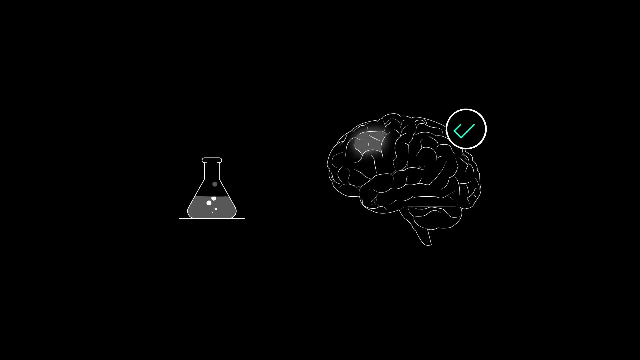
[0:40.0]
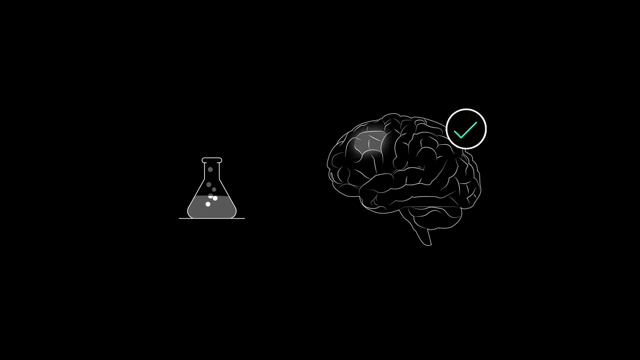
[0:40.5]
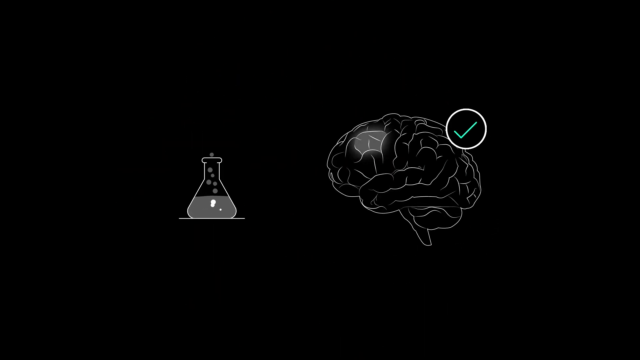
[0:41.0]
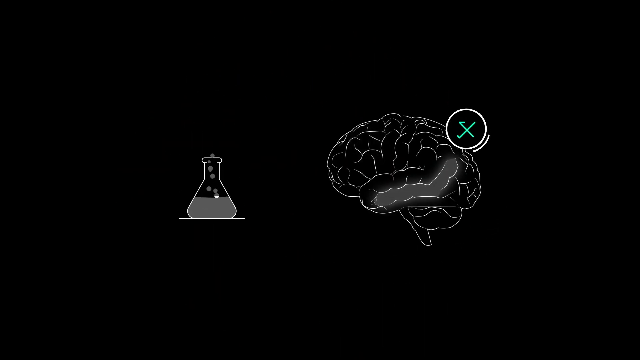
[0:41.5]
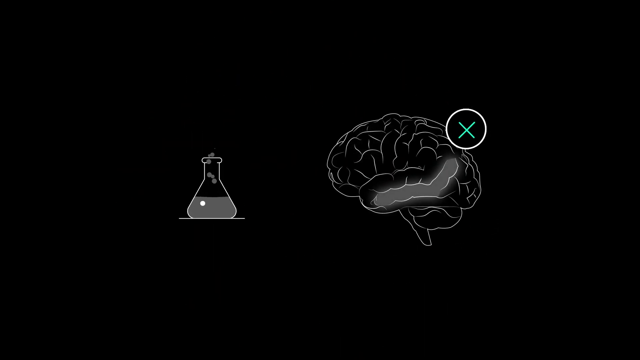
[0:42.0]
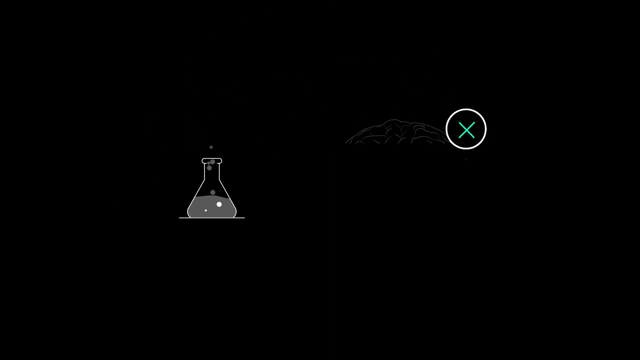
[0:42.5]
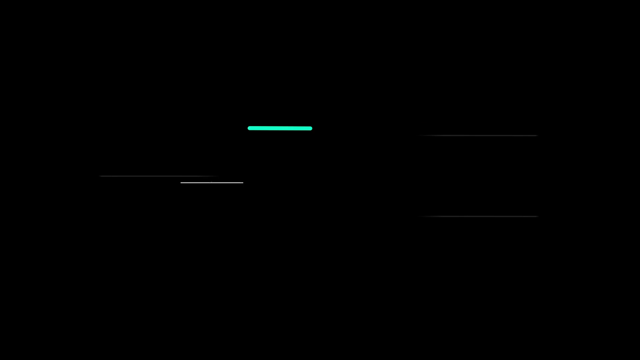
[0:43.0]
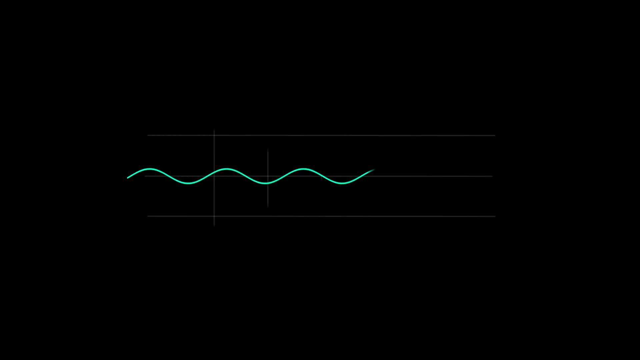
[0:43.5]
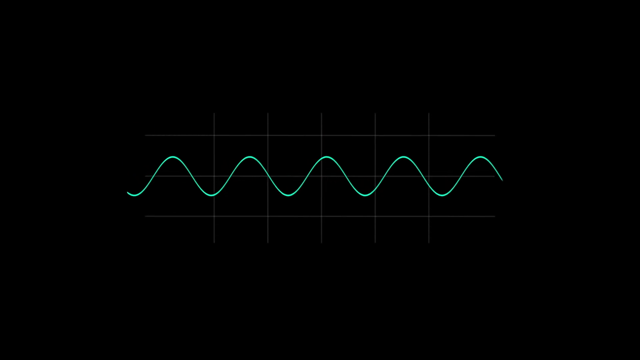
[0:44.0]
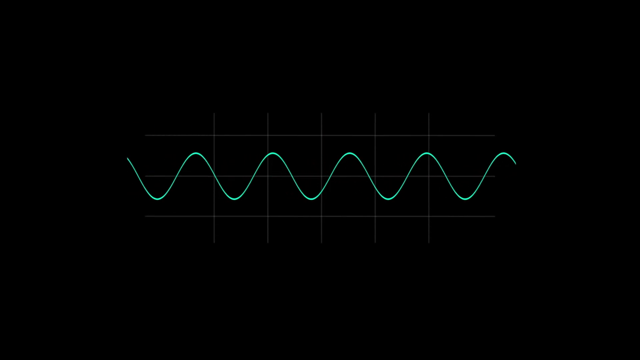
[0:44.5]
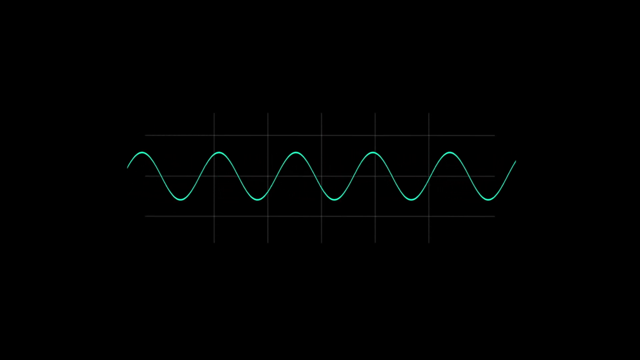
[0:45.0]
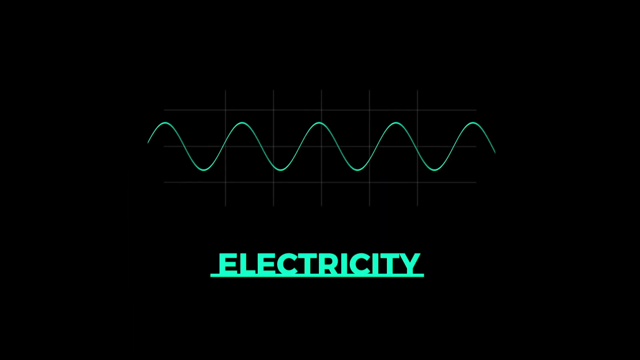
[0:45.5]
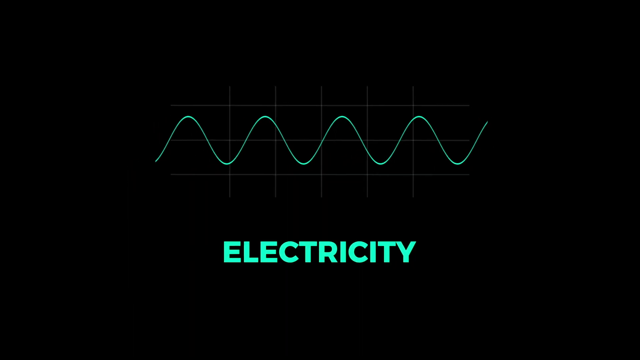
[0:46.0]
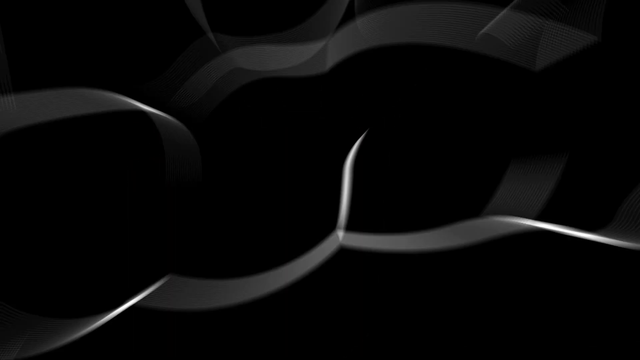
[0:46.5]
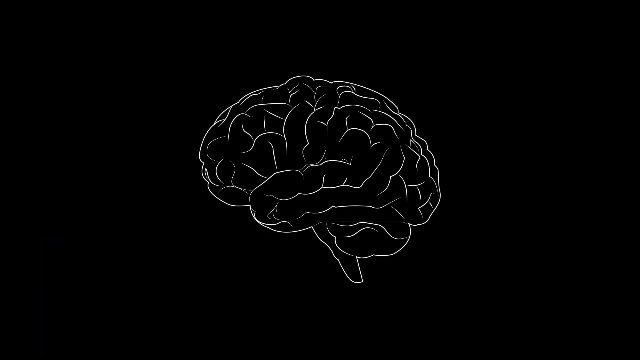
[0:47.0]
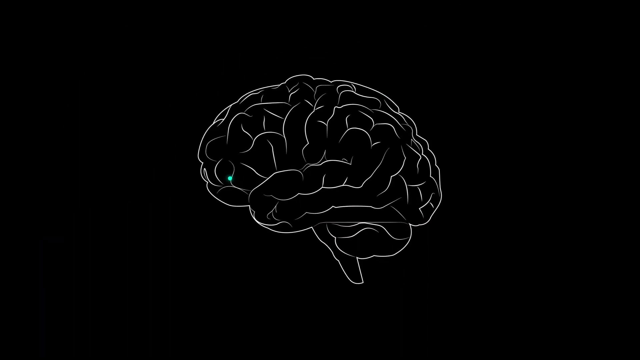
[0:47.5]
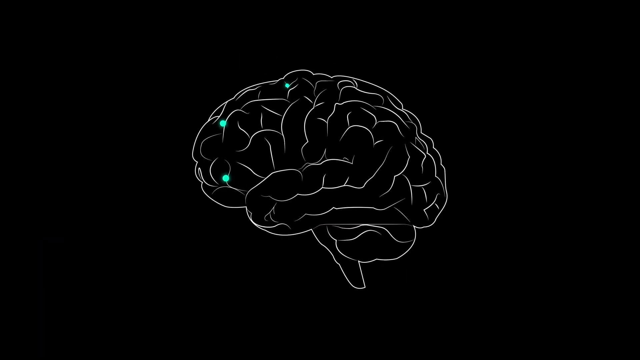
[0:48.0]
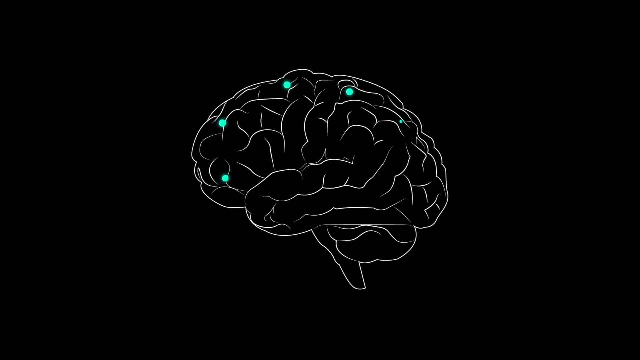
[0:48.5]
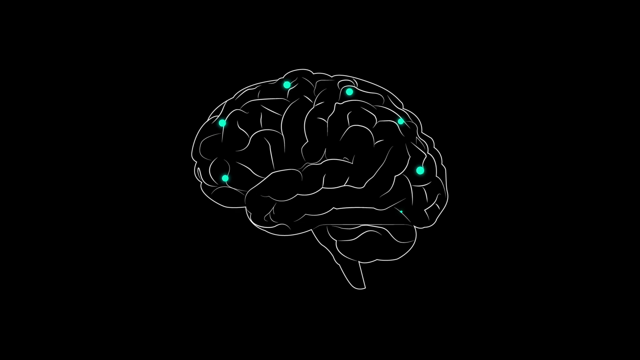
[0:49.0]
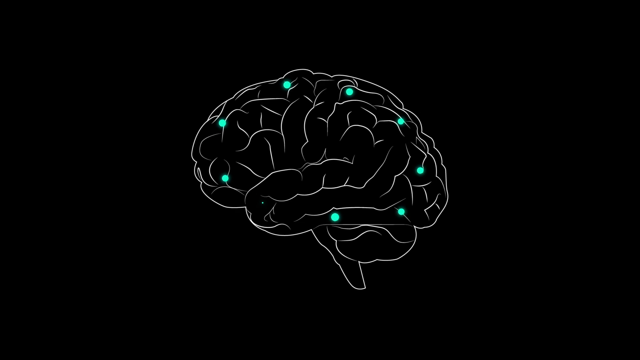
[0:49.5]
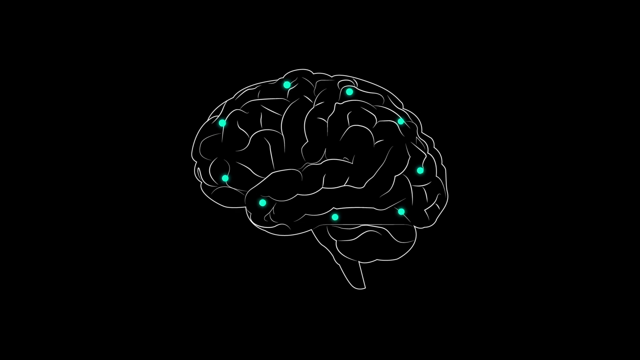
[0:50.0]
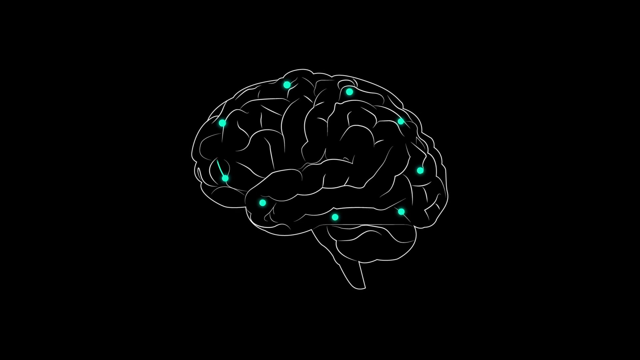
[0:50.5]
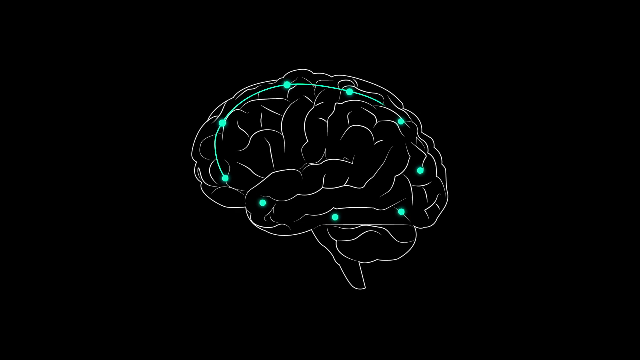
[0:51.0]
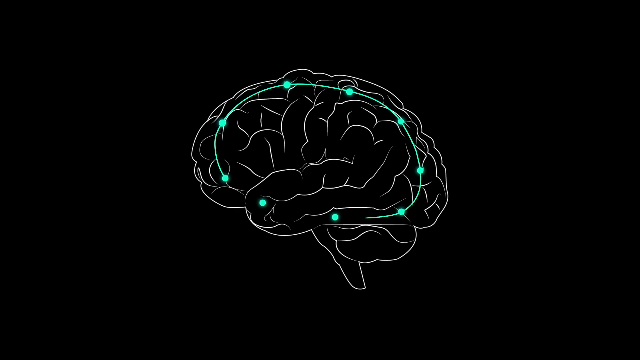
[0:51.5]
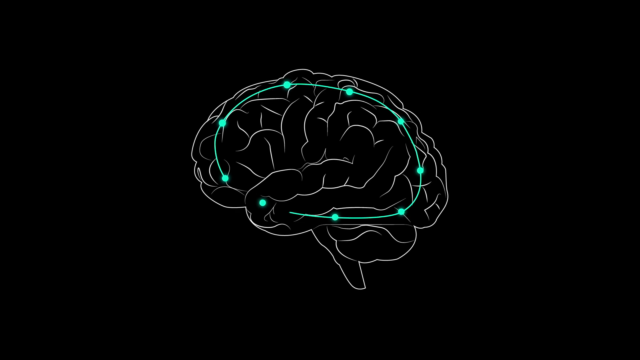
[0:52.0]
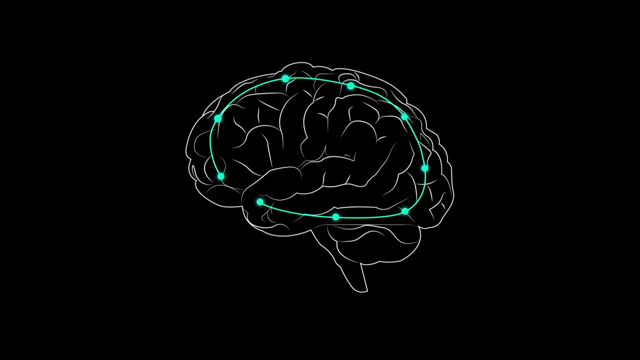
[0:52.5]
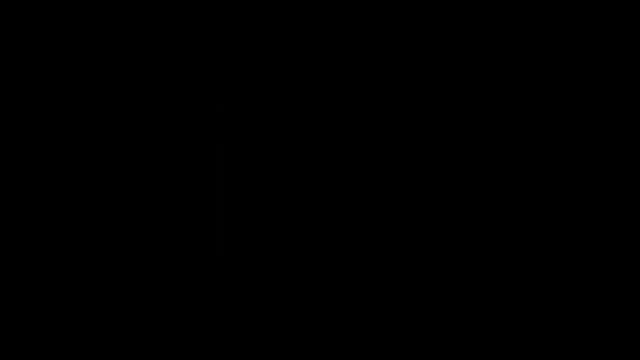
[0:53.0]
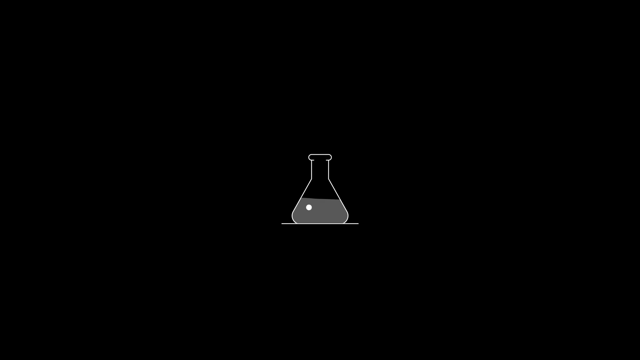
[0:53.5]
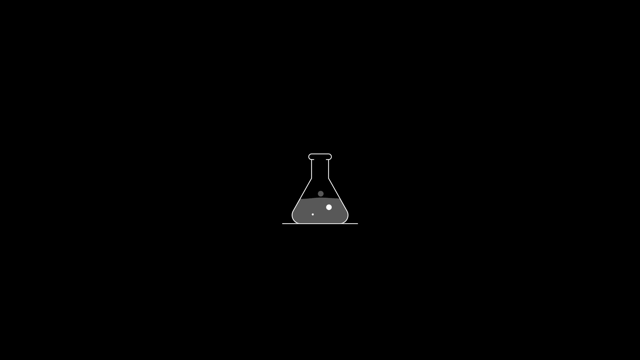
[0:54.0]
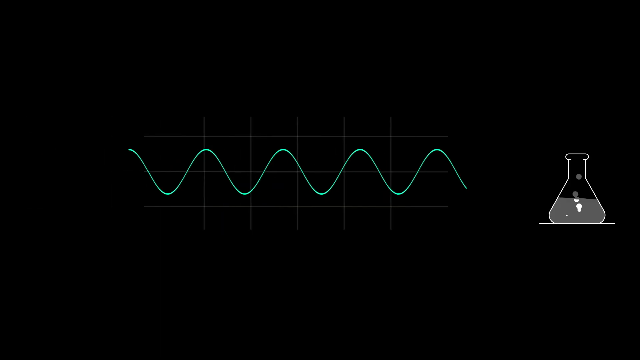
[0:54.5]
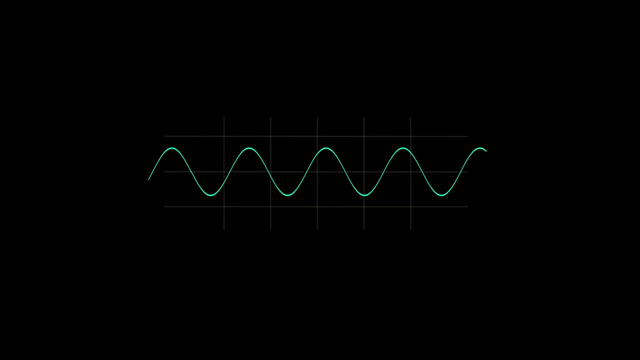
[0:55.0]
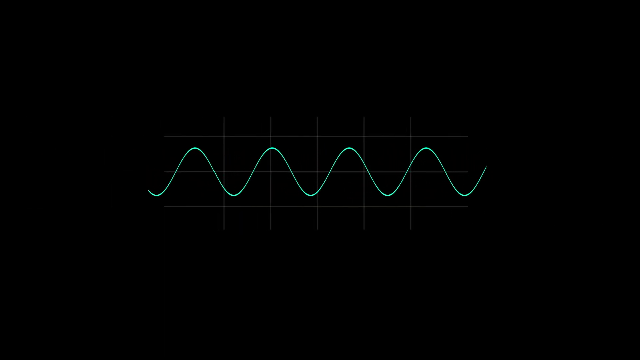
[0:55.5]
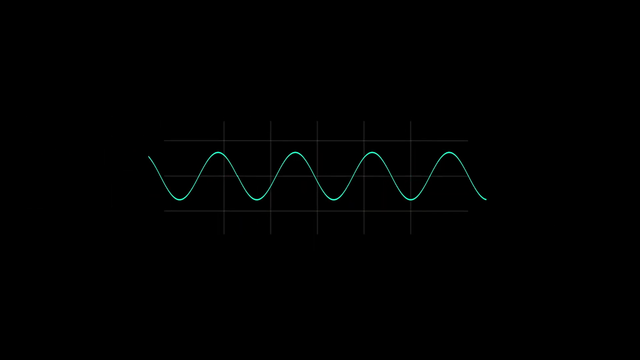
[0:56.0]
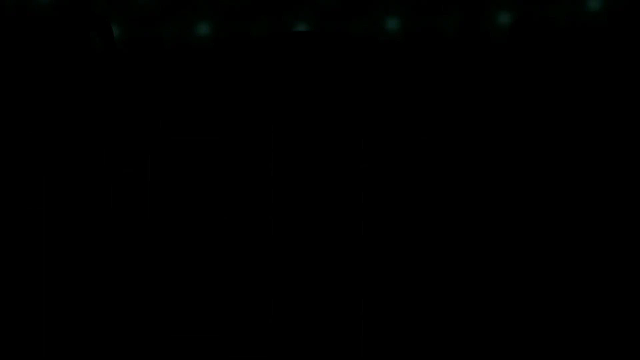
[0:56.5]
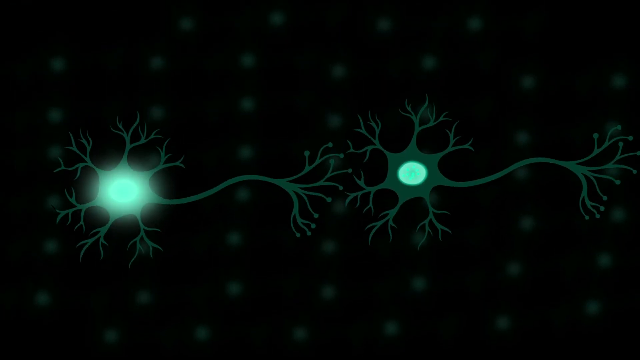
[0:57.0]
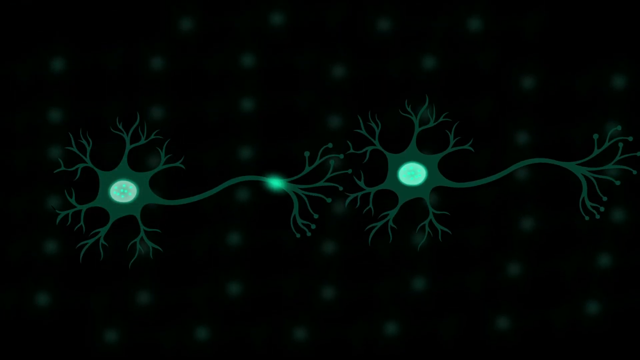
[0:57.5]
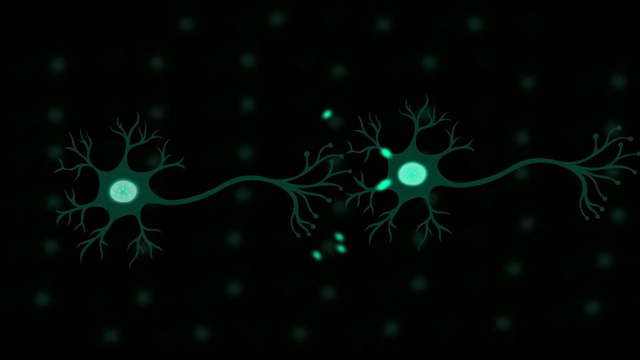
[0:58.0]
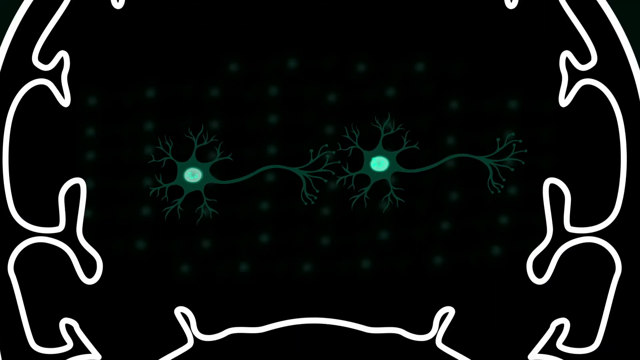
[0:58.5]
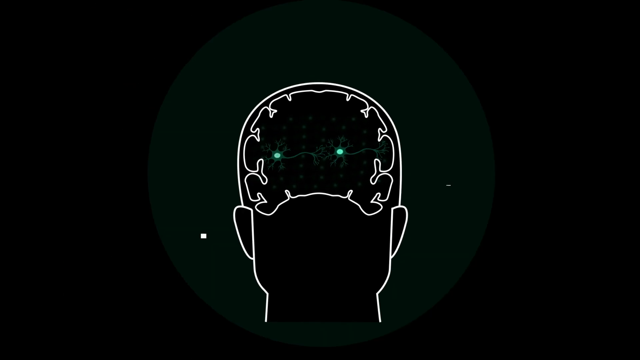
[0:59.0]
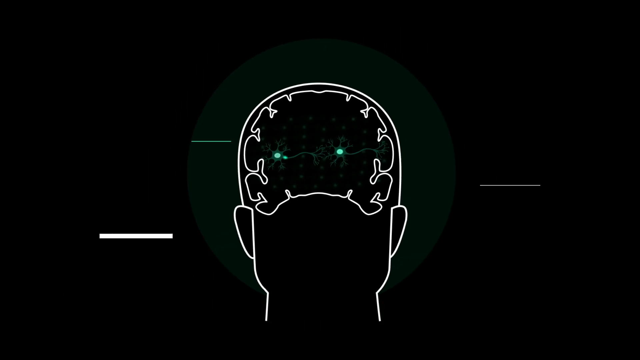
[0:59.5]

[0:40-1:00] The animation shows the human brain on the right and a chemistry jar on the left with bubbles coming out of it. A green squiggly line goes through the brain. The brain then appears with green dots popping up in it, indicating electricity going through the brain. The chemistry bottle is shown with wavelengths across the screen. A depiction of the inside of the brain follows, sending little electric shocks or wavelengths as the brain communicates with itself. The whole sequence has a black background with the graphics drawn in green. It is apparently a depiction of how the human brain works.